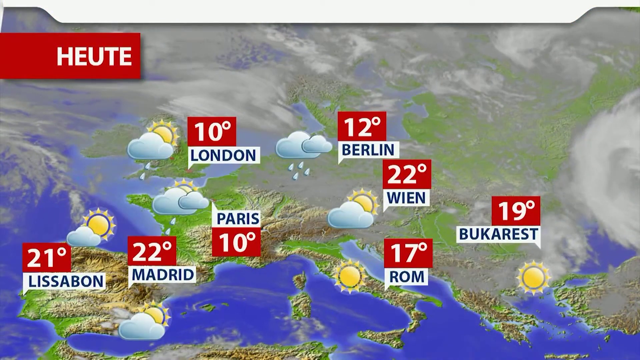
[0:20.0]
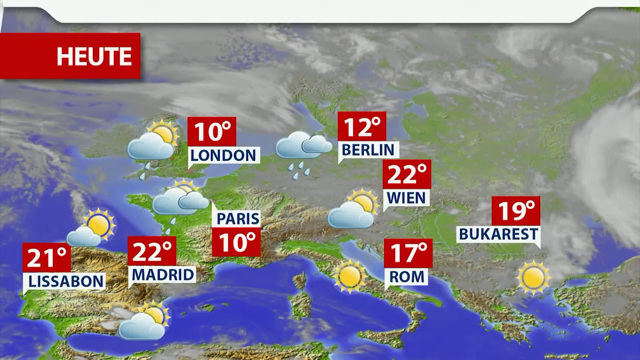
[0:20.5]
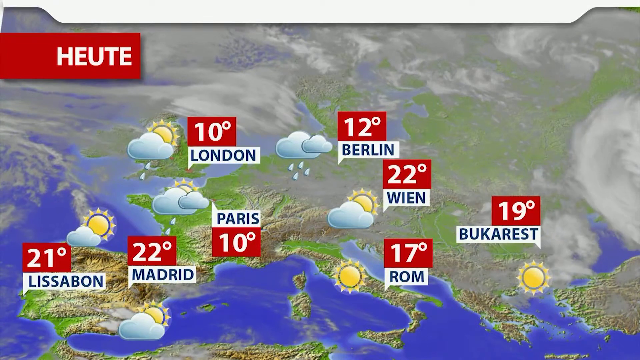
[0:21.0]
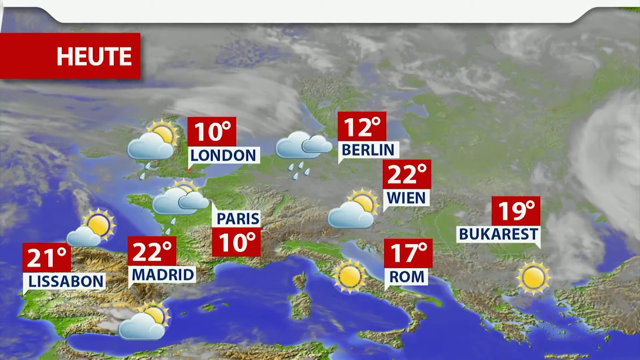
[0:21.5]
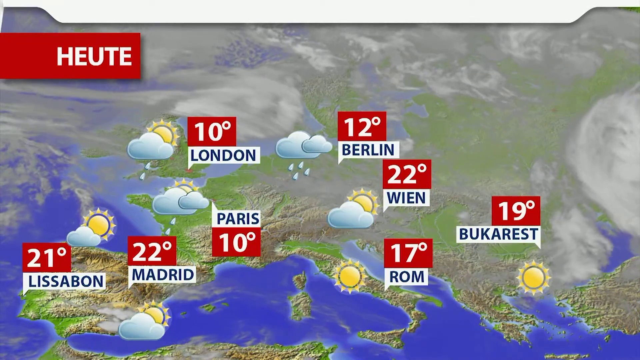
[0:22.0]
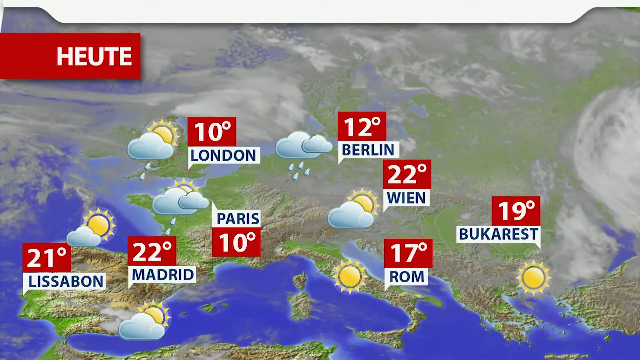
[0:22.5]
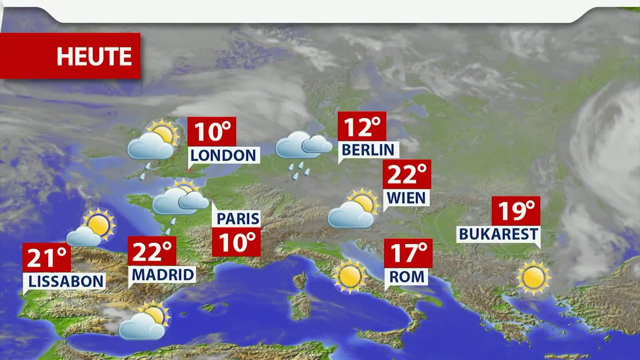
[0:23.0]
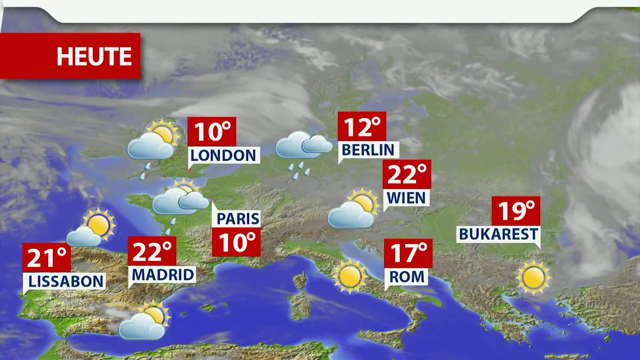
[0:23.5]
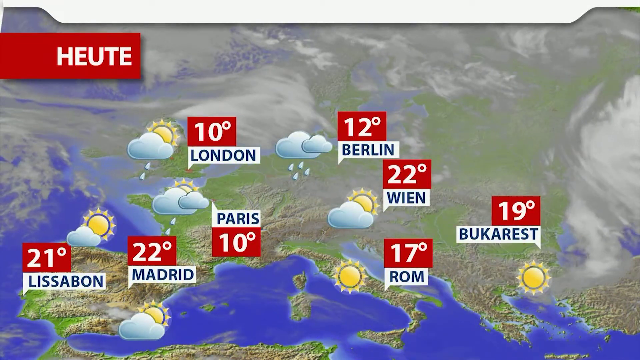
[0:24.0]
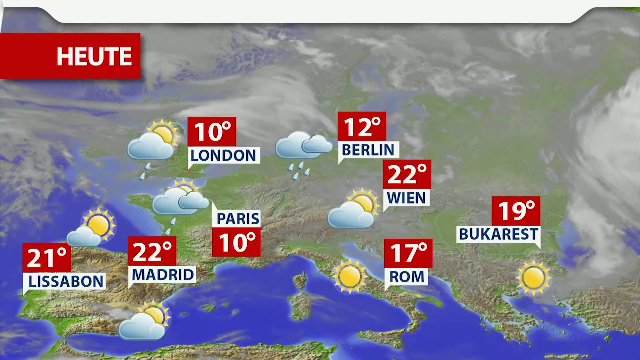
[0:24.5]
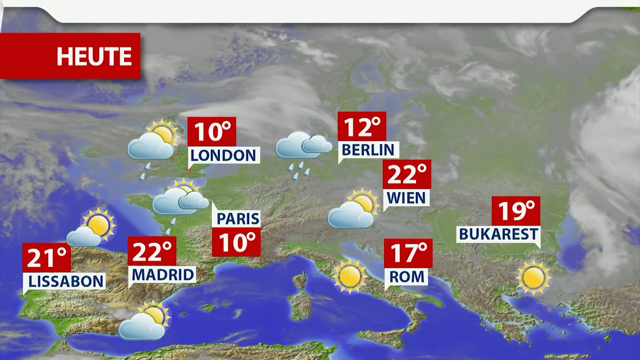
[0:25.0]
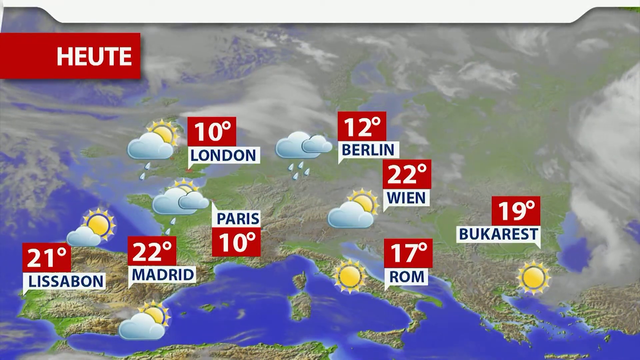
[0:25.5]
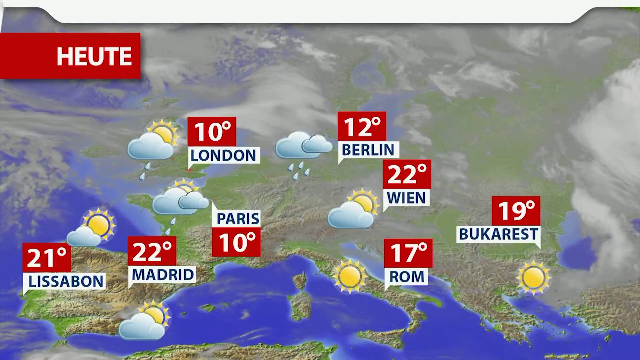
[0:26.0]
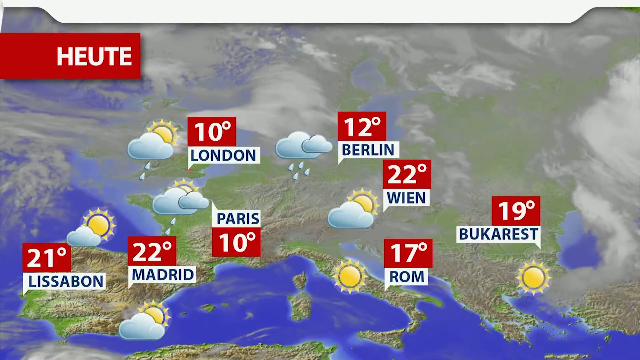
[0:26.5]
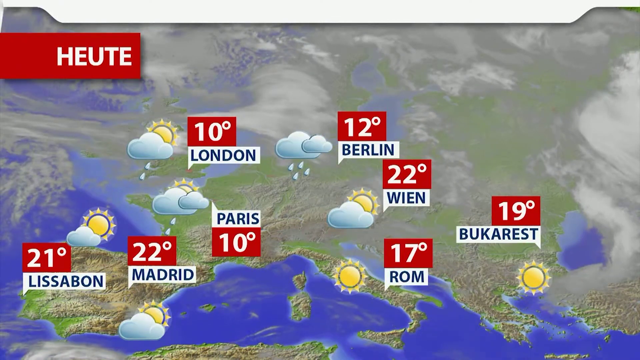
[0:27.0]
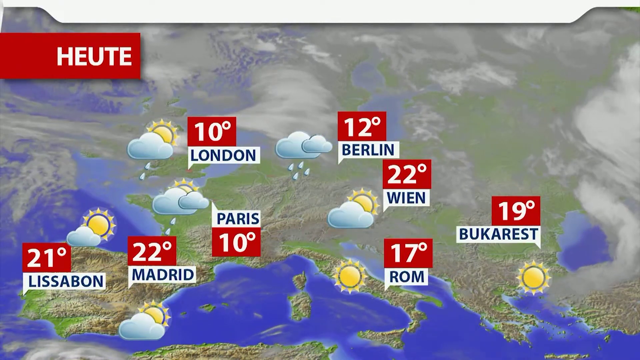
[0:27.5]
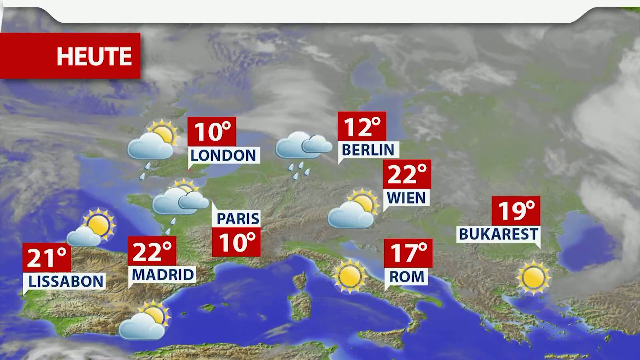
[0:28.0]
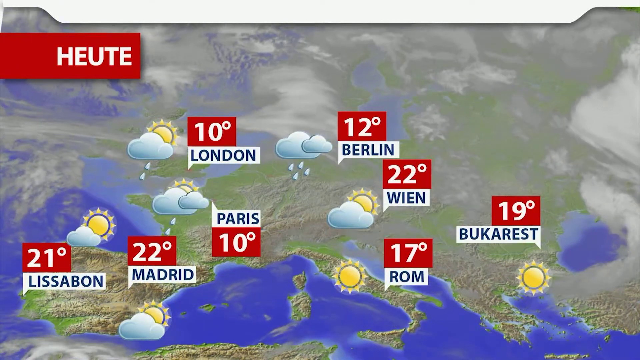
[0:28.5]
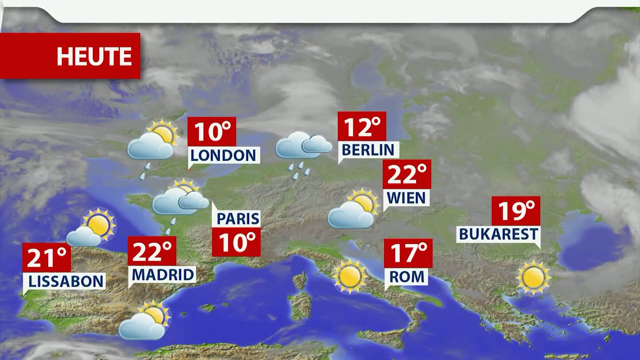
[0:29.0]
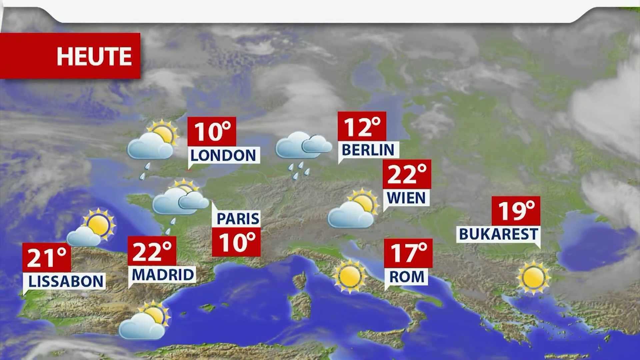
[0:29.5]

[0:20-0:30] A weather map shows different numbers in small red squares, written in white and given in degrees. There are clouds with the sun, a cloud with red, and places with only the sun. Different provinces or countries are represented on the map. In the background a white cloud keeps moving, seemingly anticlockwise, and it seems very cold in those areas. A green color represents some places, and there is a blue part that looks like sky.